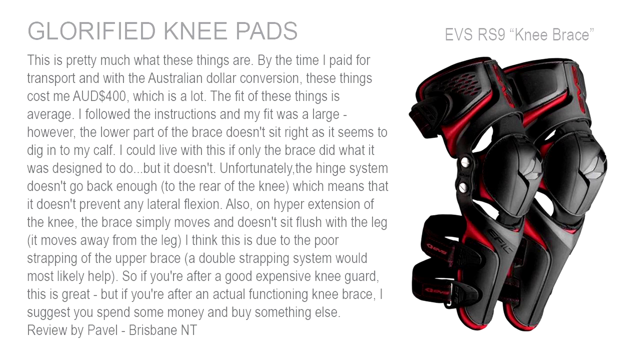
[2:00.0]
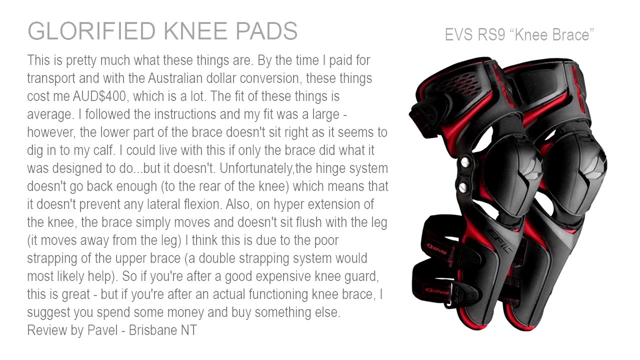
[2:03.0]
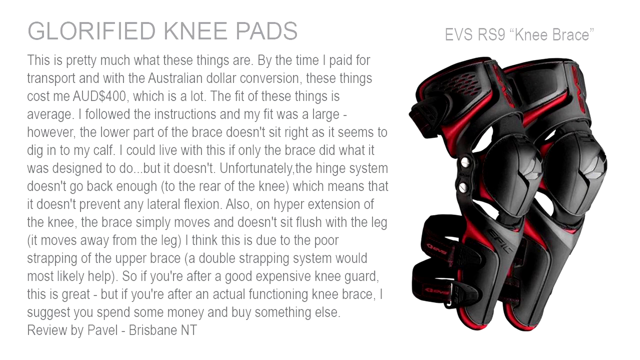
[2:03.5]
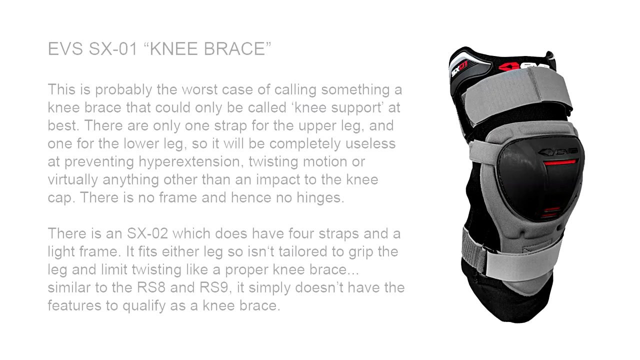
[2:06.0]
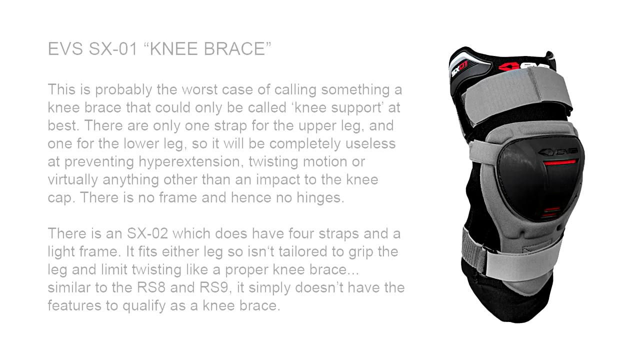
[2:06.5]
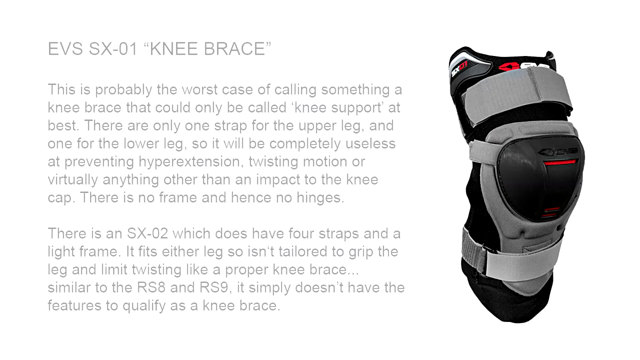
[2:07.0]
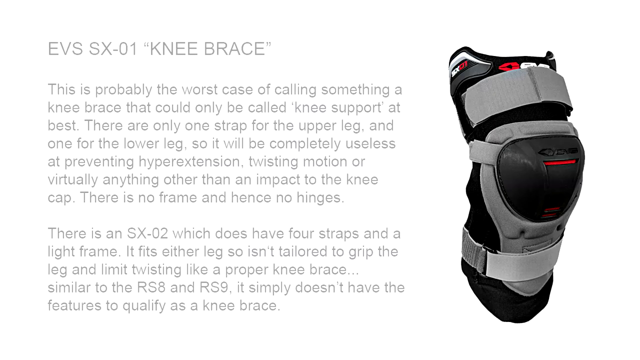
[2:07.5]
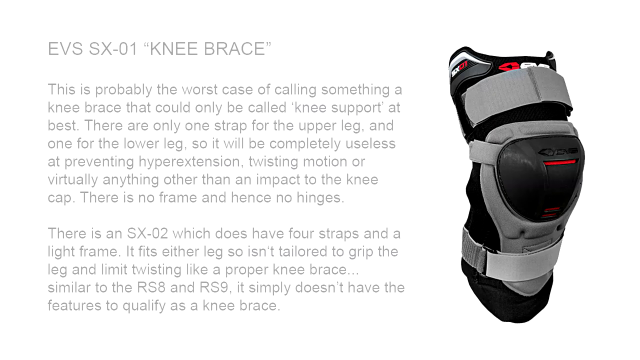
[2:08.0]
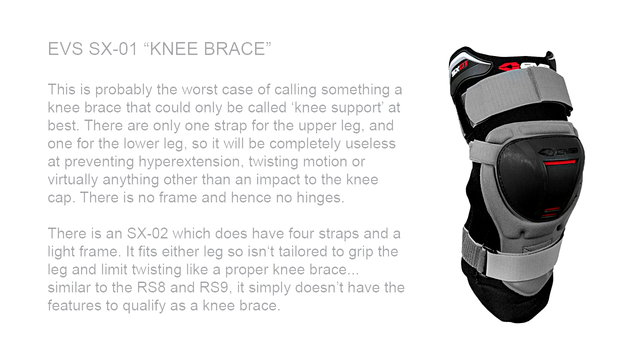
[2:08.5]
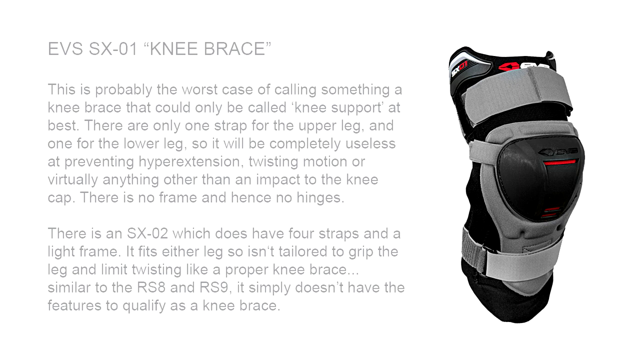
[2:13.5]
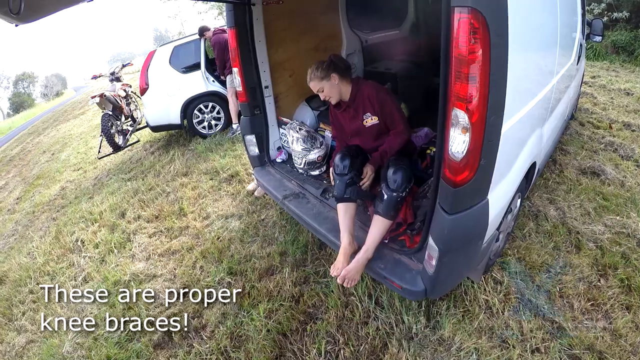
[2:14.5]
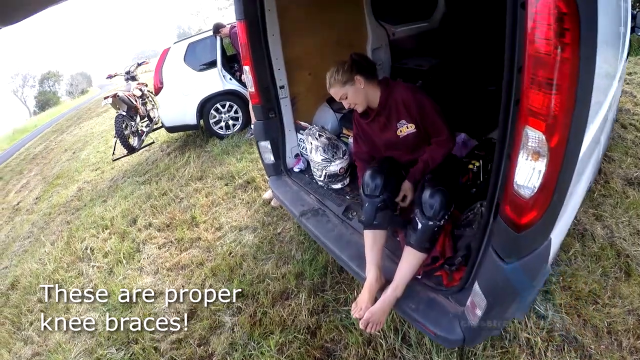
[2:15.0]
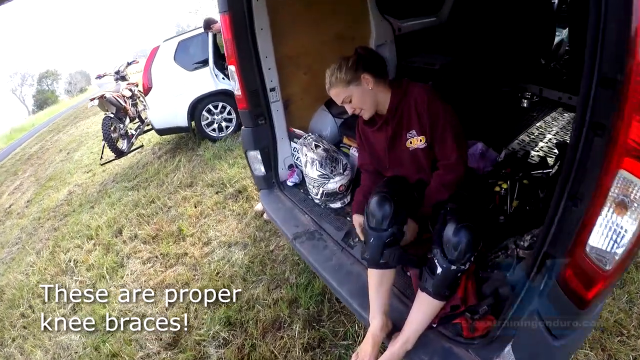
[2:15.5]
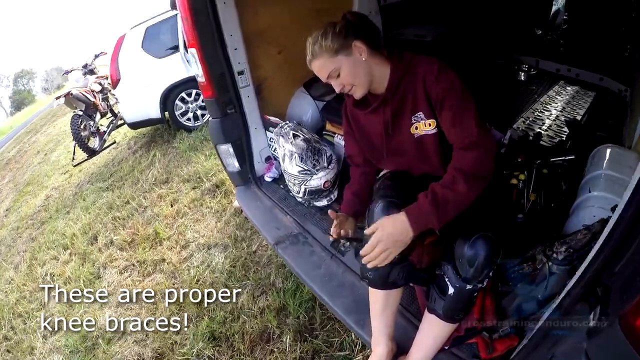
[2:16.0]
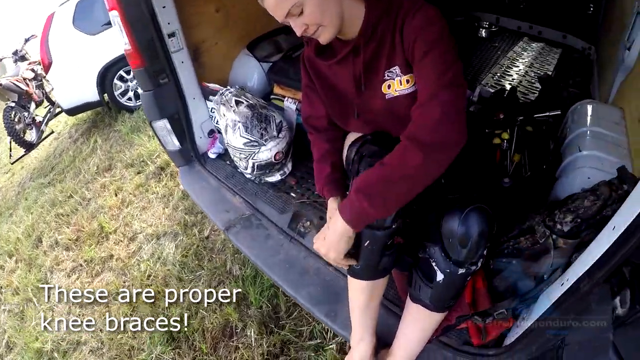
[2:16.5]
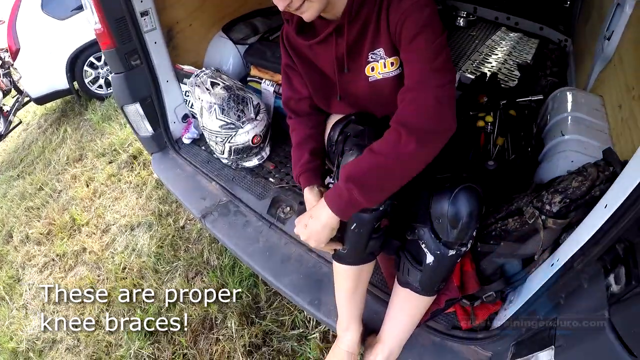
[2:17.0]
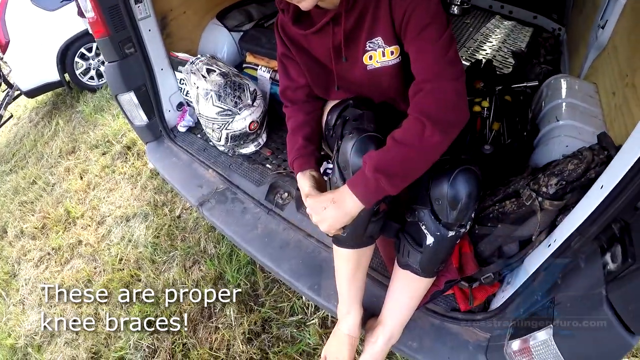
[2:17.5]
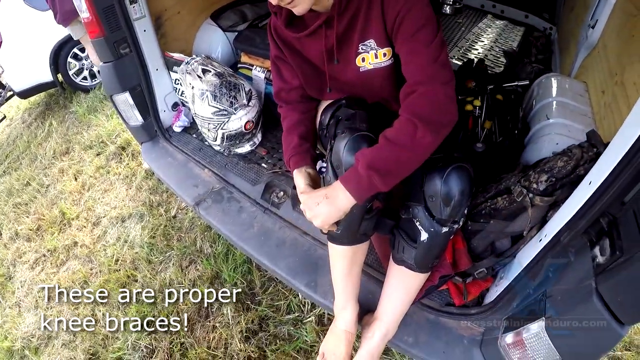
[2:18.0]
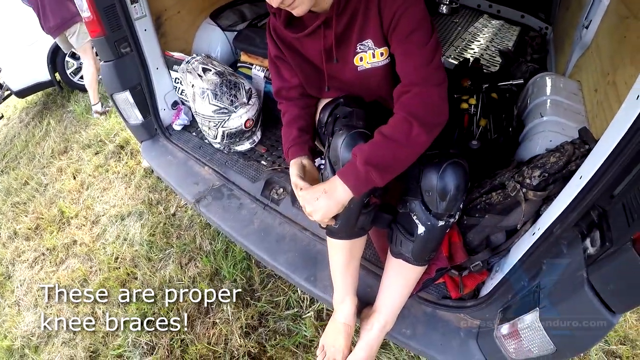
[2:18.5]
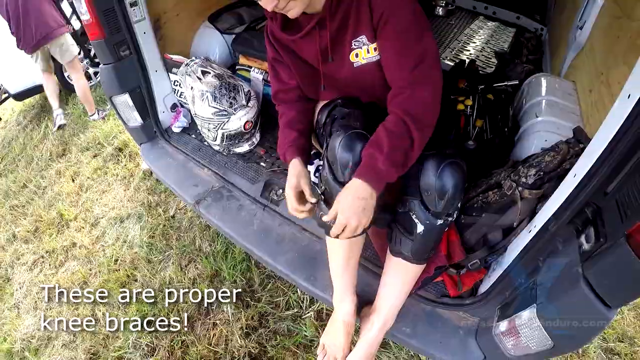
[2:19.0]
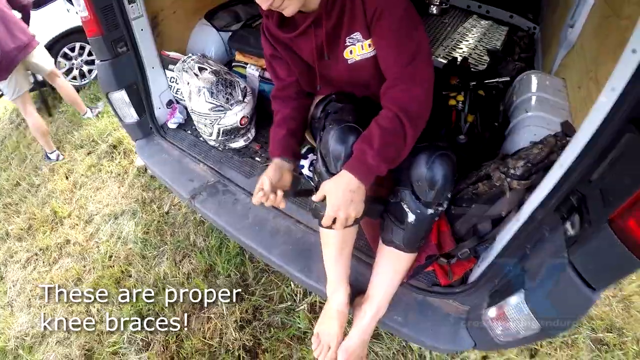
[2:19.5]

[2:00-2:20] The heading "GLORIFIED KNEECAPS" appears in capital letters in grey. Underneath, a description begins "this is pretty much what these things are" and mentions the braces costing 400 Australian dollars. It goes on to discuss the fit, the lower part of the braces digging into the calf, and the hinge system not going back enough to the rear of the knee. It ends with "if you're after a good expensive knee guard this is great but if you're after an actual functioning knee brace I suggest you spend some money and buy something else" and "review by pebble".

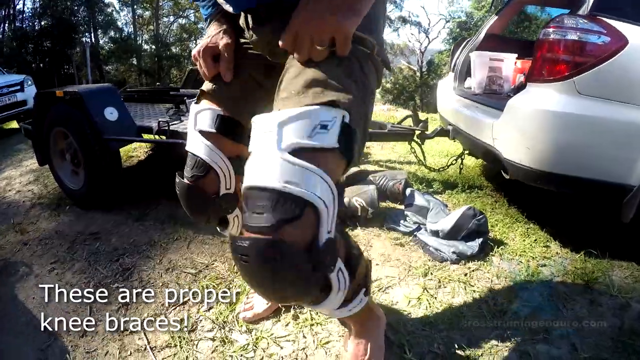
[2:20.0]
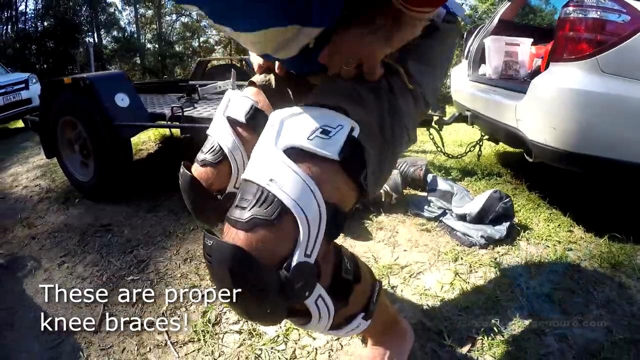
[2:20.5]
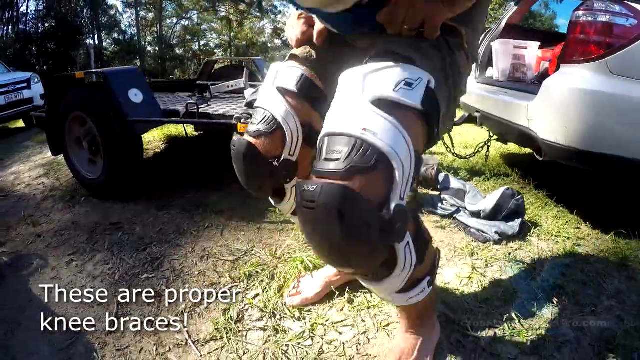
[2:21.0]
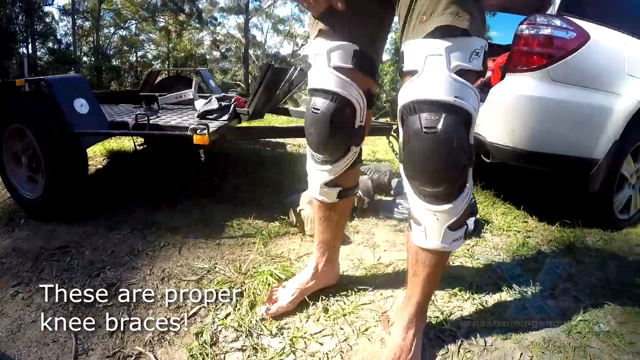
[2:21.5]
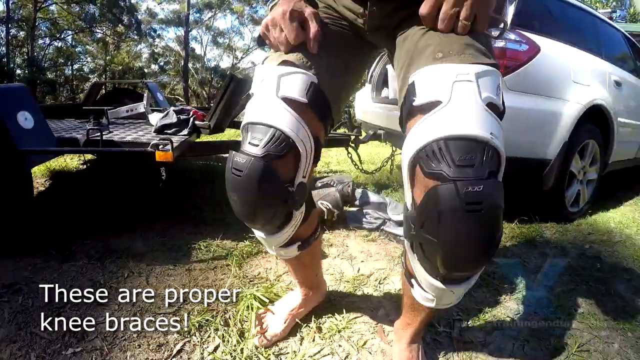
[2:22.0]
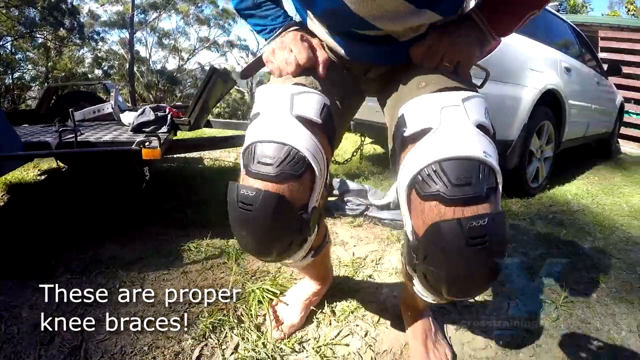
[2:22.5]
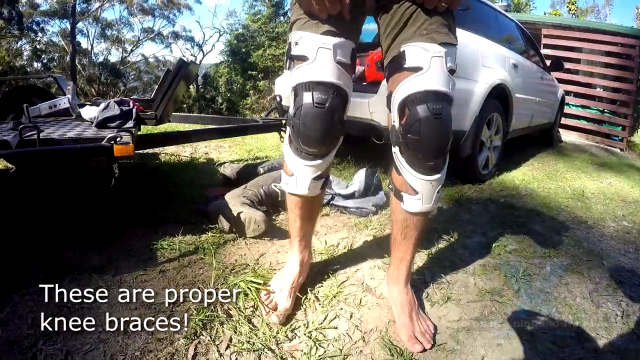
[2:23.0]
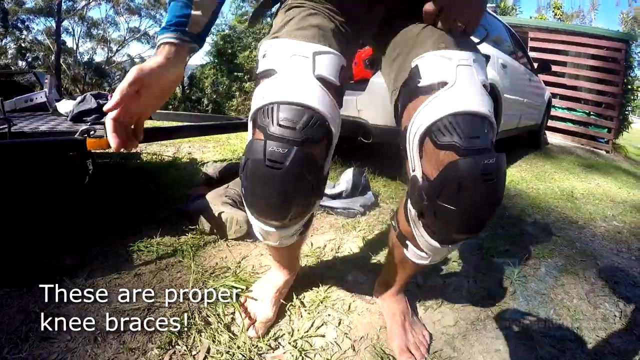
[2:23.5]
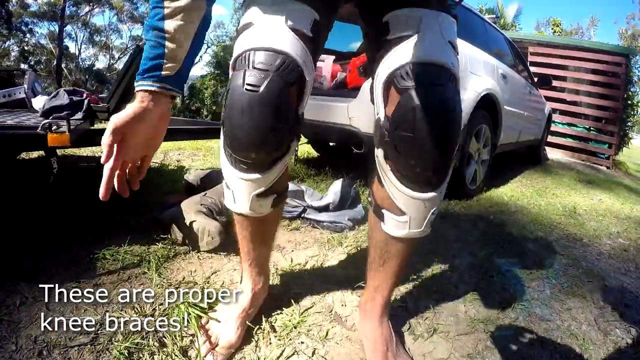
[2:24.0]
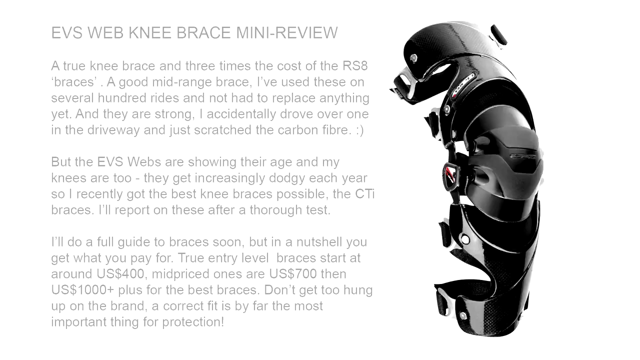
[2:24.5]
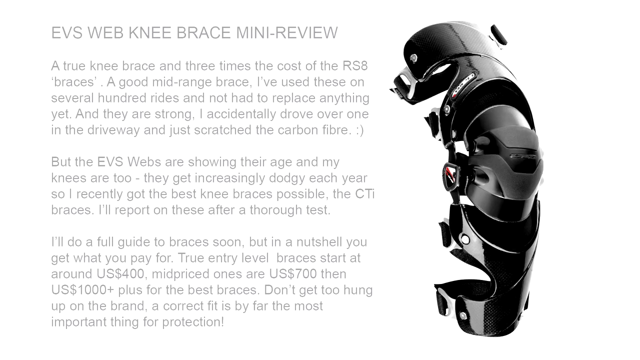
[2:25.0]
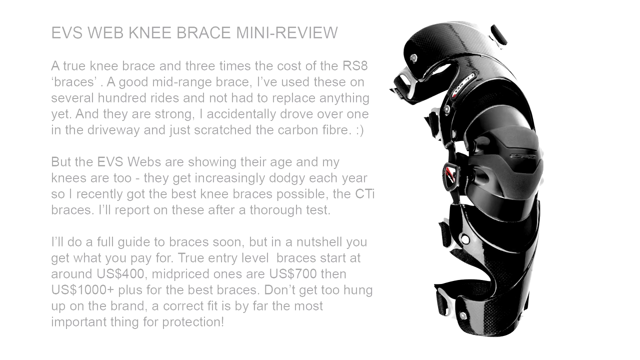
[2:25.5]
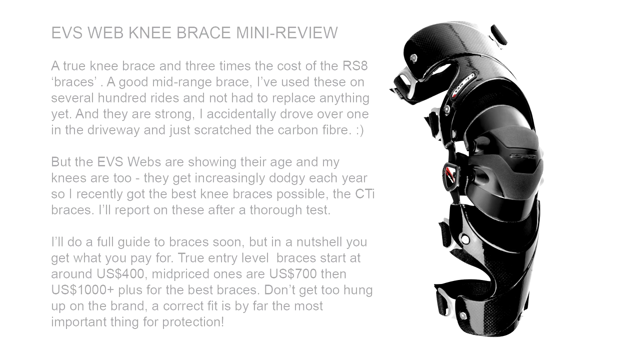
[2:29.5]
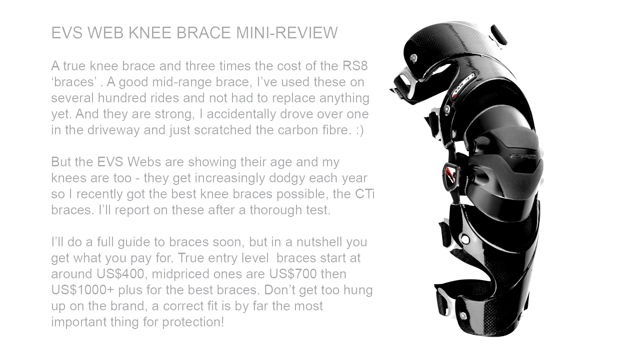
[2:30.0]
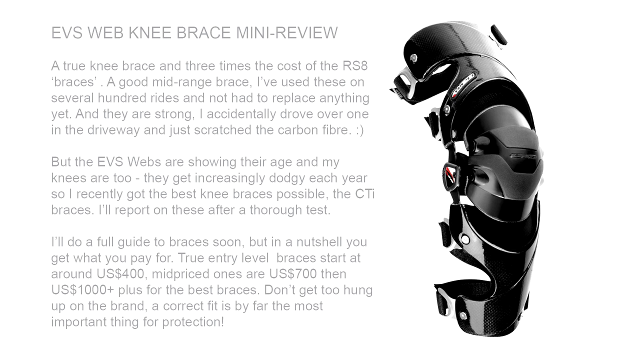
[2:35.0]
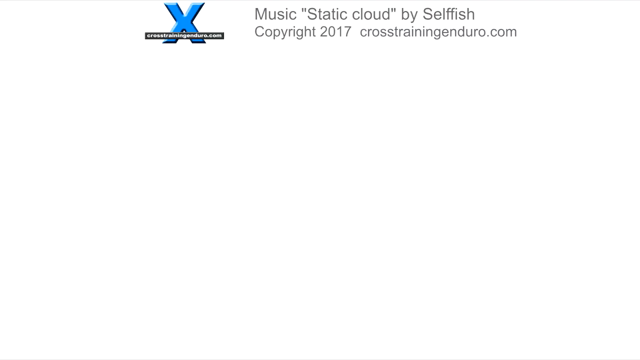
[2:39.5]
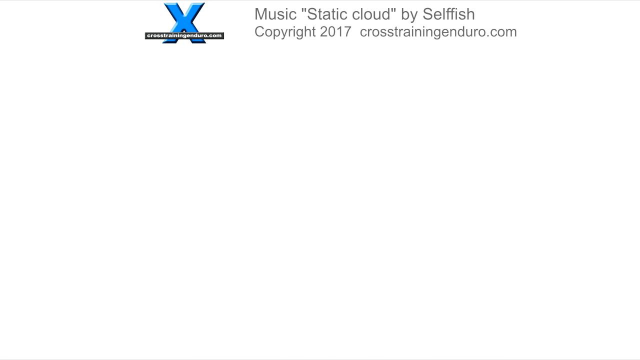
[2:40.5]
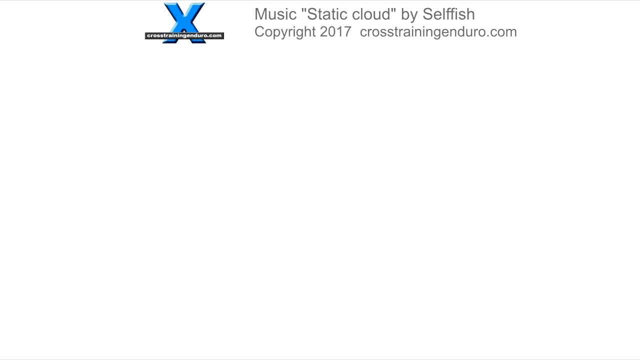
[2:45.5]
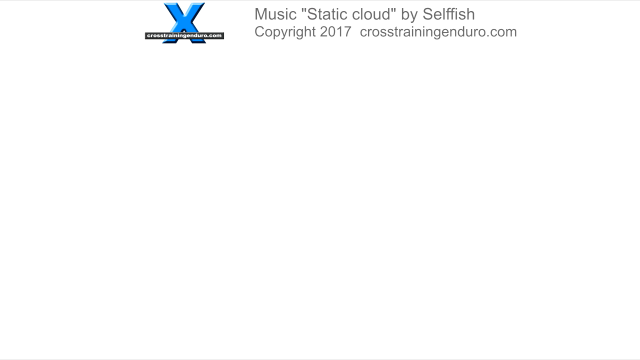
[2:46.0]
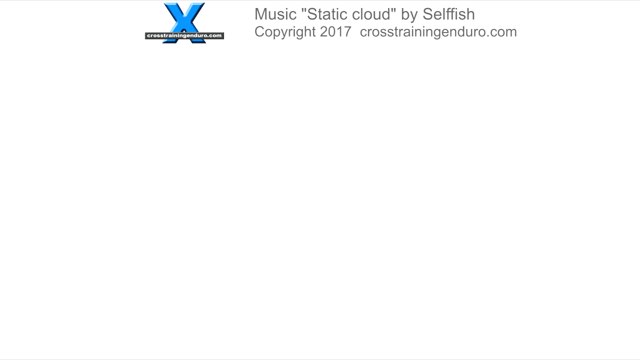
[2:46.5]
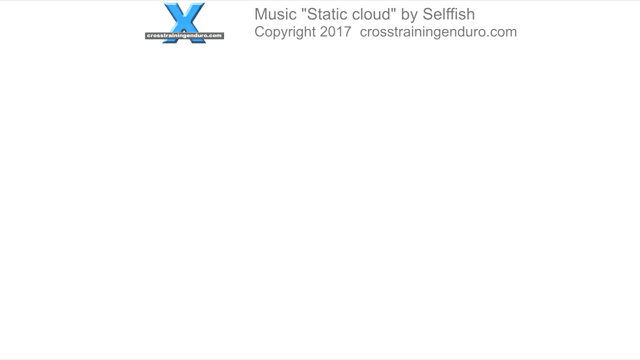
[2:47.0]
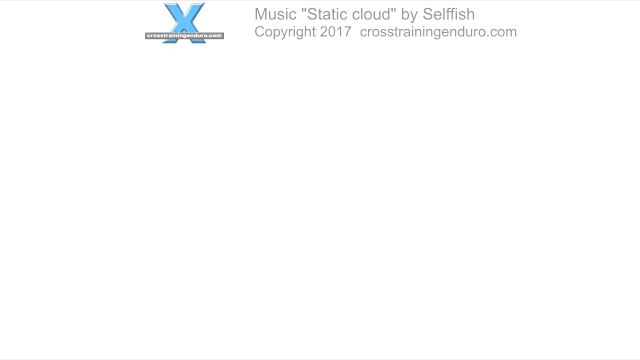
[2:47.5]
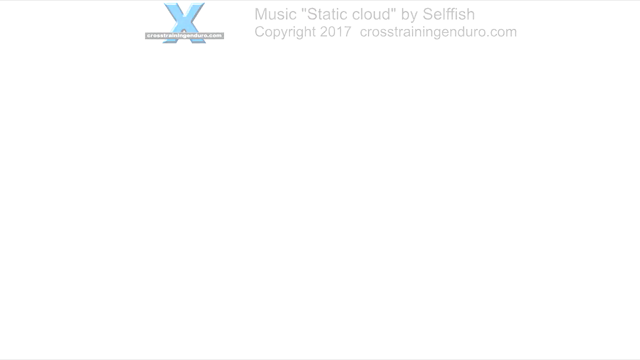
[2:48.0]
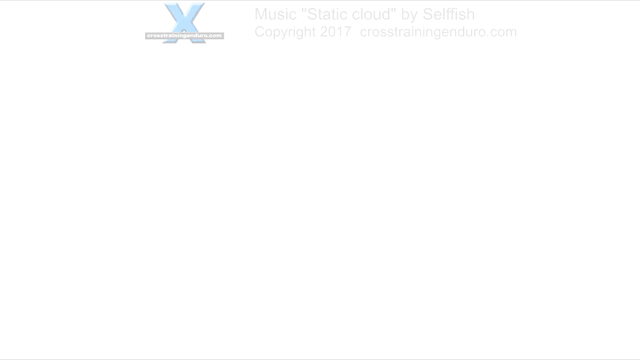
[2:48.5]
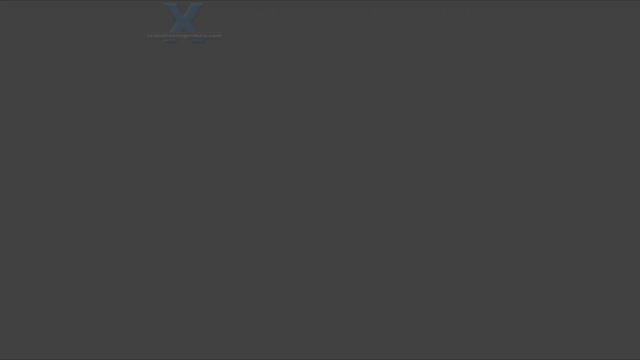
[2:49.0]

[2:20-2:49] In the background is a white car with red lights, and behind the car is a black trailer, with a glimpse of another car behind them. In the foreground, a white person wears black knee braces with white on them on both legs. The caption below reads "these are proper knee braces!" The person kneels and bends forwards and backwards to show how they work. Another page follows, reading "EVS Web Knee Brace Mini Review" and then: "a true knee brace and three times the cost of the RS8 braces. A good mid-range brace, I've used these on several hundred rides and not had to replace anything yet. And they are strong. I accidentally drove over one in the driveway and just scratched the carbon fiber. But the EVS webs are showing their age and my knees are too. They get increasingly dodgy each year, so I recently got the best knee braces possibly, the CTI braces. I'll report on these after a thorough test. I'll do a full guide to the braces soon, but in a nutshell, you get what you pay. The entry-level braces start at around $400, mid-price ones $700, then $1,000 plus for the base braces. I don't get too hung up on the brand. A correct fit is by far the most important thing".